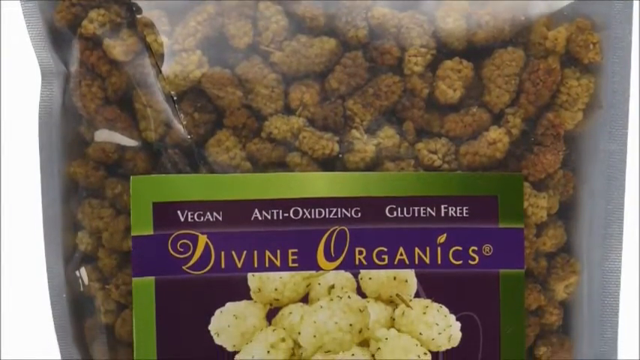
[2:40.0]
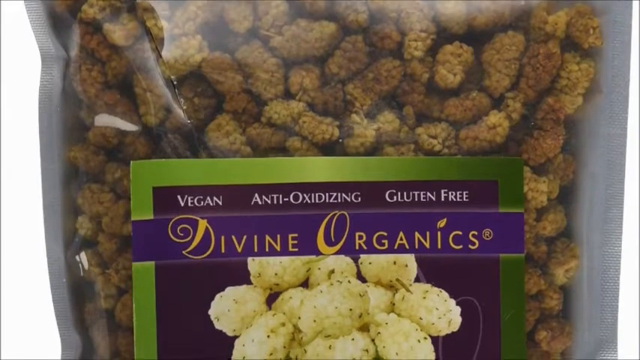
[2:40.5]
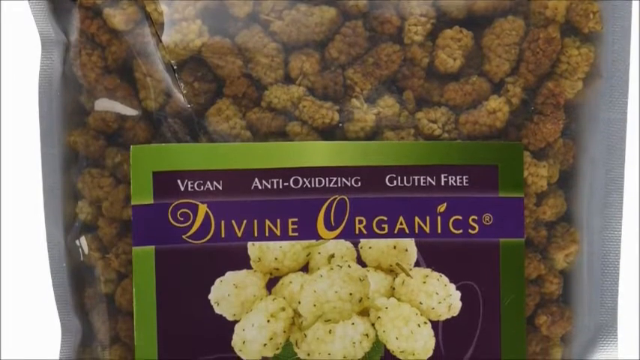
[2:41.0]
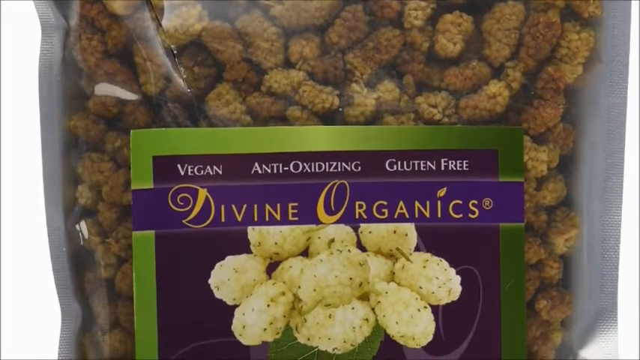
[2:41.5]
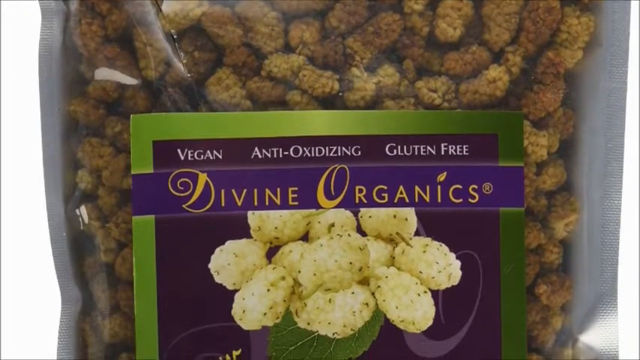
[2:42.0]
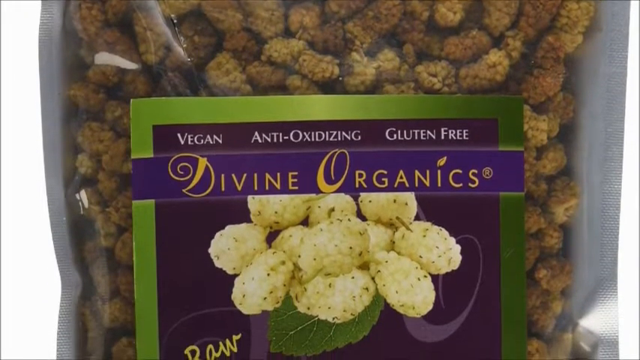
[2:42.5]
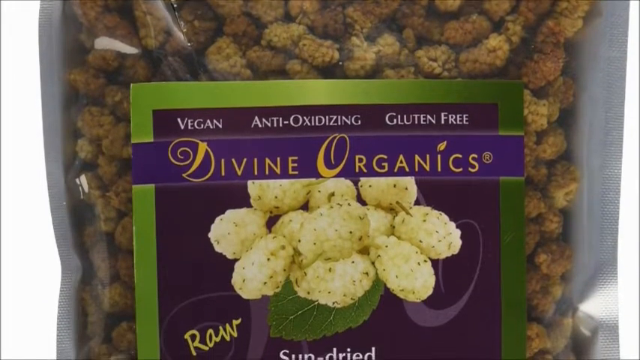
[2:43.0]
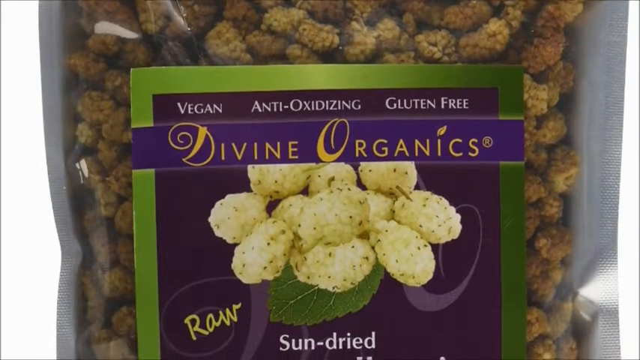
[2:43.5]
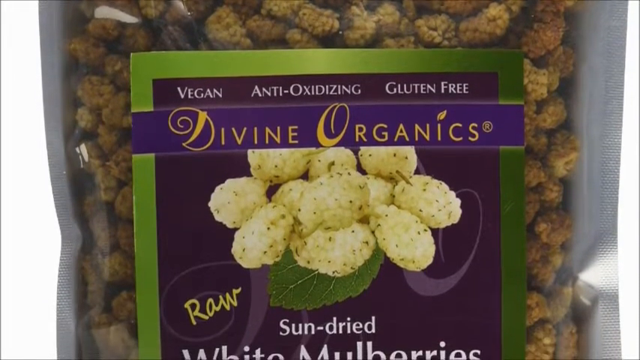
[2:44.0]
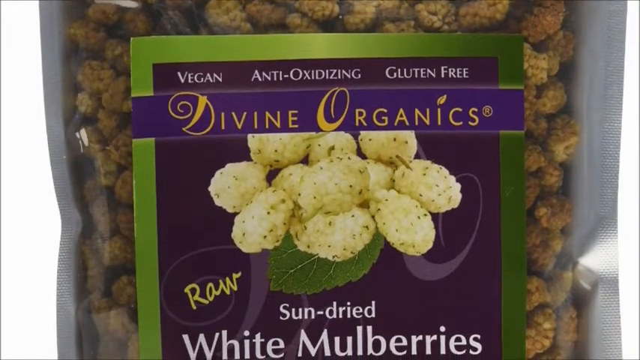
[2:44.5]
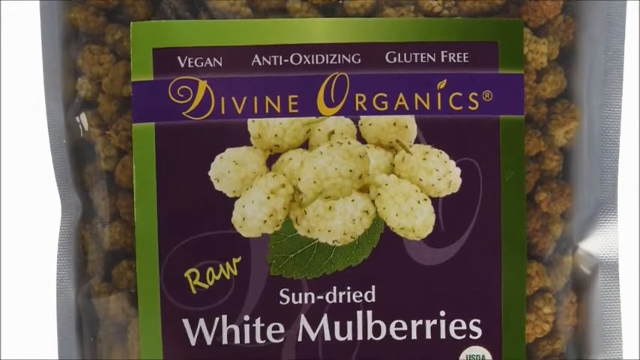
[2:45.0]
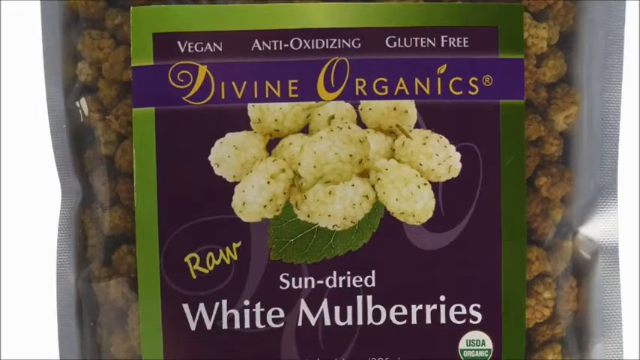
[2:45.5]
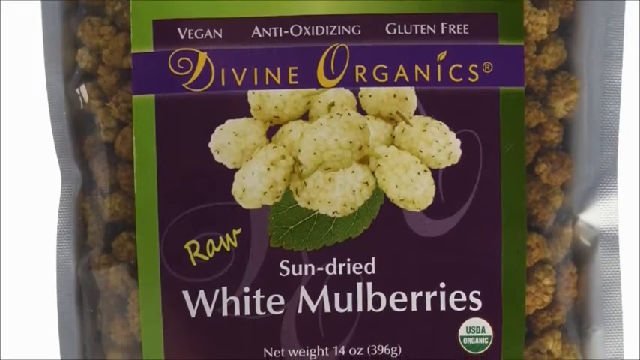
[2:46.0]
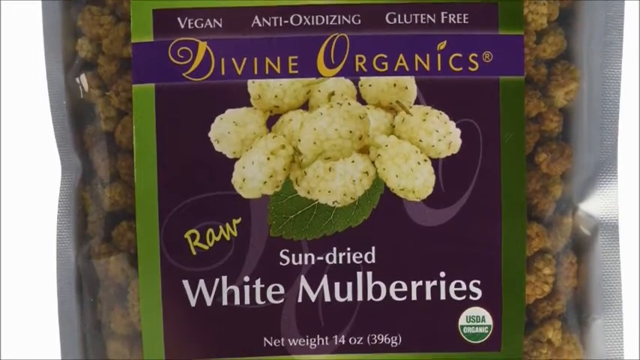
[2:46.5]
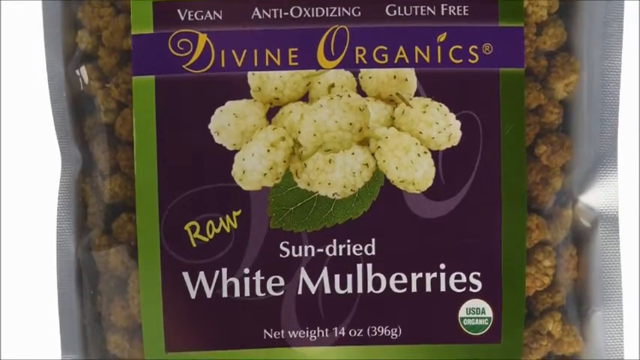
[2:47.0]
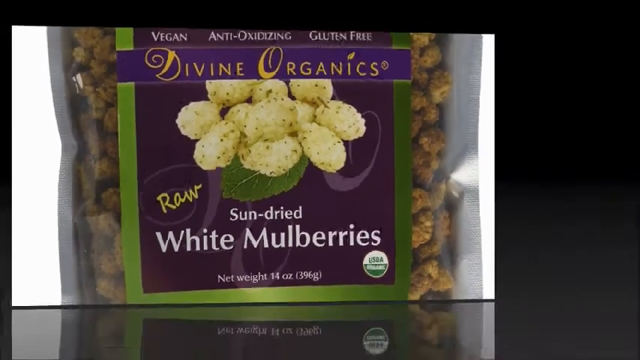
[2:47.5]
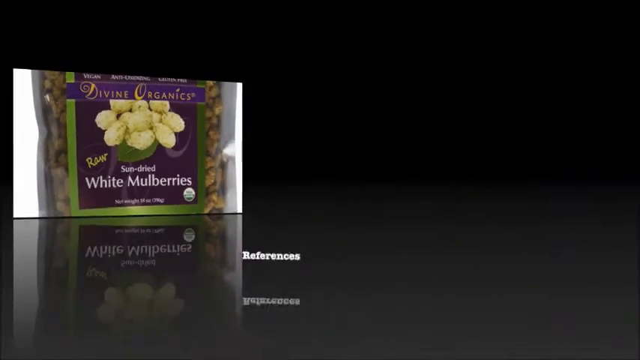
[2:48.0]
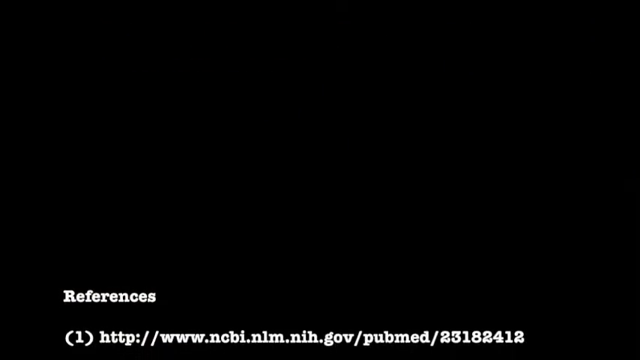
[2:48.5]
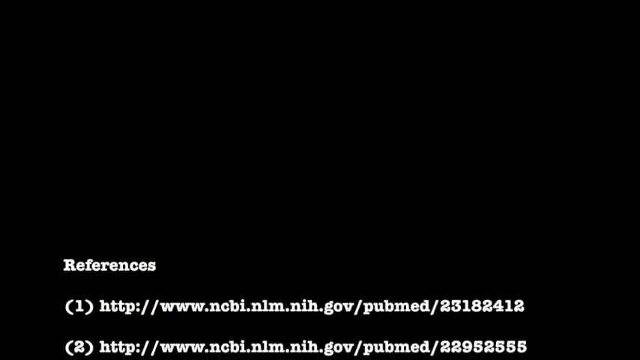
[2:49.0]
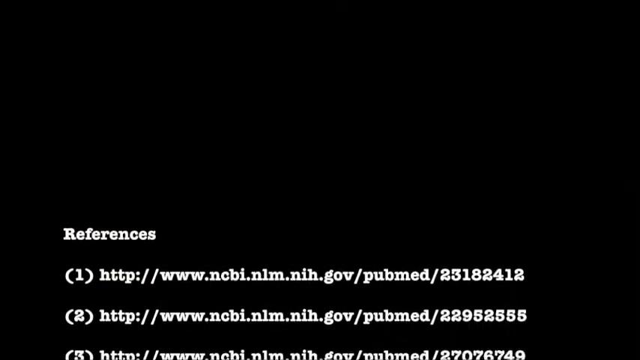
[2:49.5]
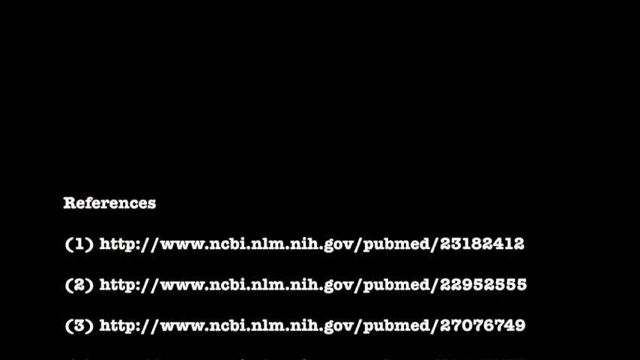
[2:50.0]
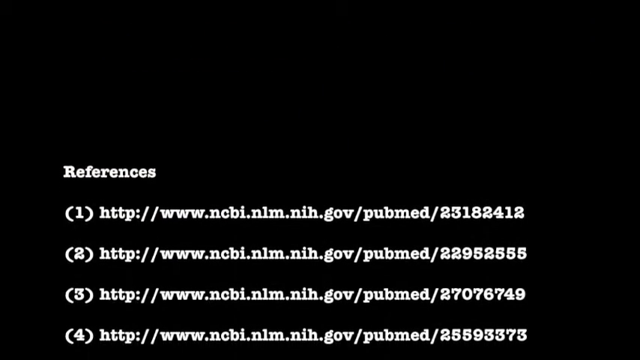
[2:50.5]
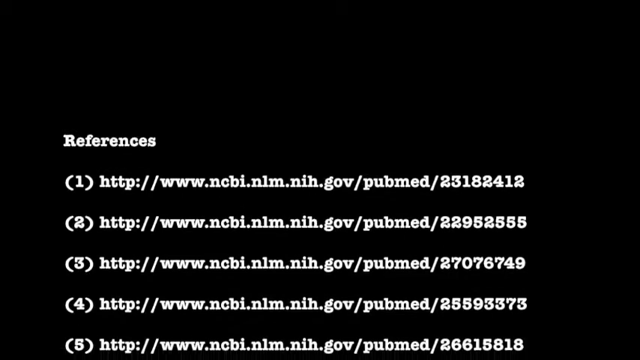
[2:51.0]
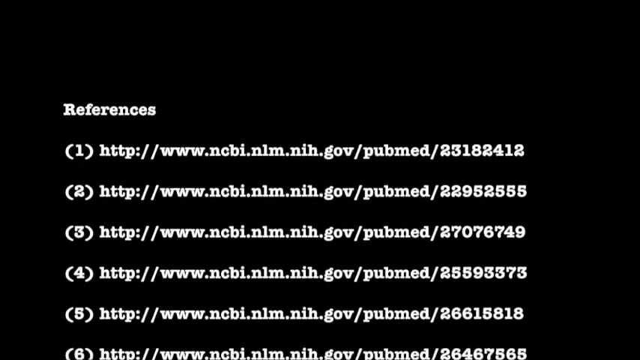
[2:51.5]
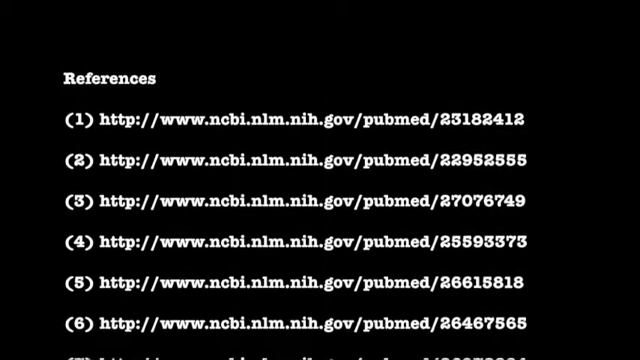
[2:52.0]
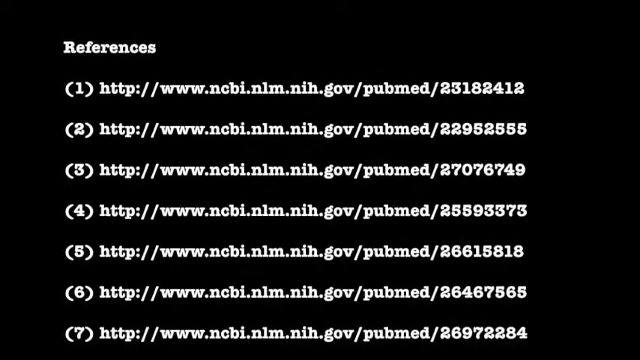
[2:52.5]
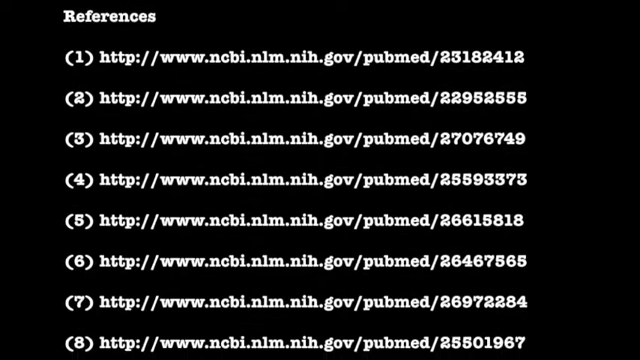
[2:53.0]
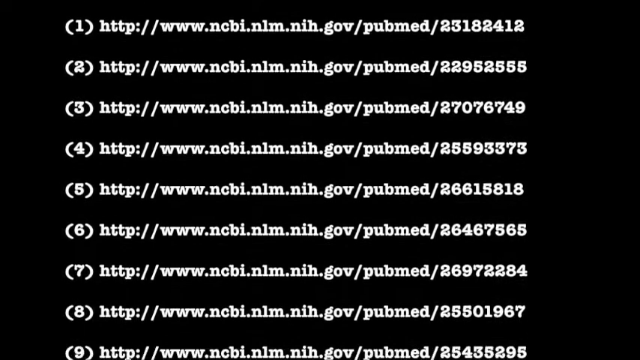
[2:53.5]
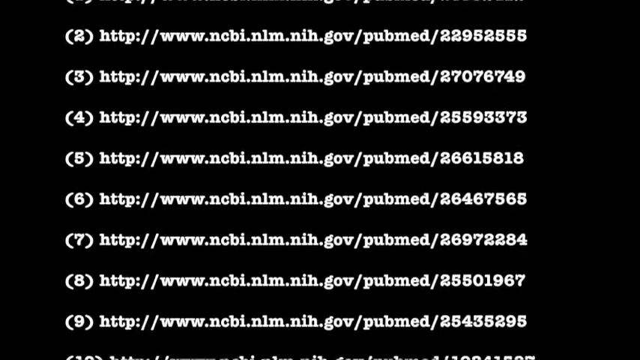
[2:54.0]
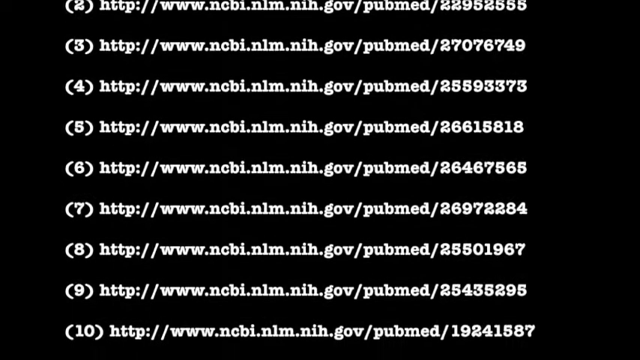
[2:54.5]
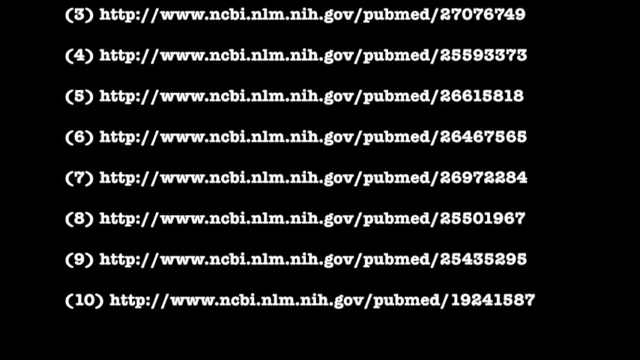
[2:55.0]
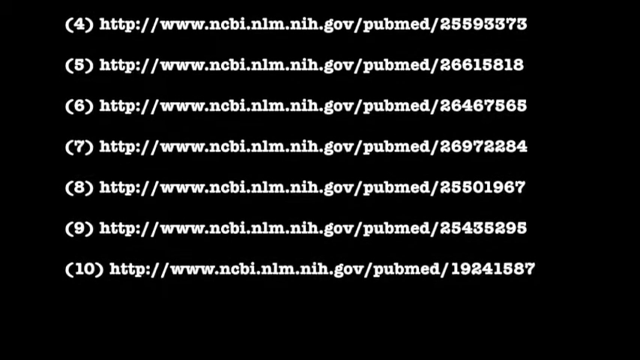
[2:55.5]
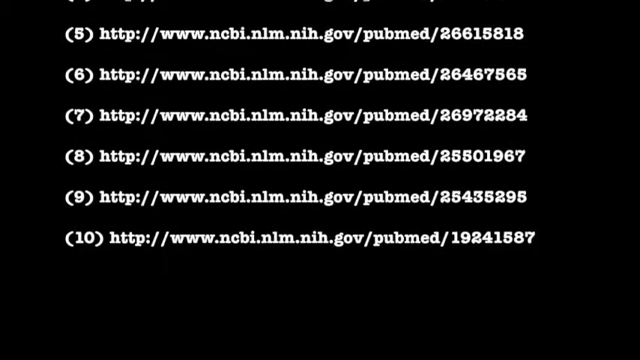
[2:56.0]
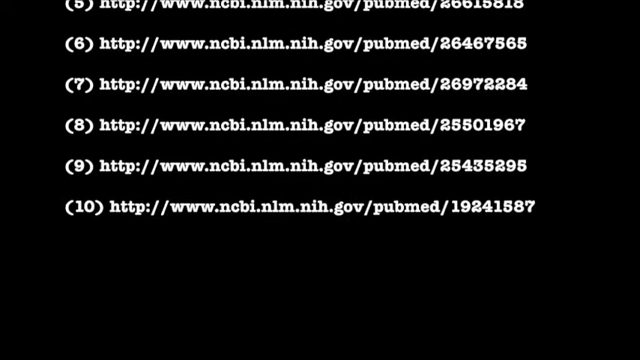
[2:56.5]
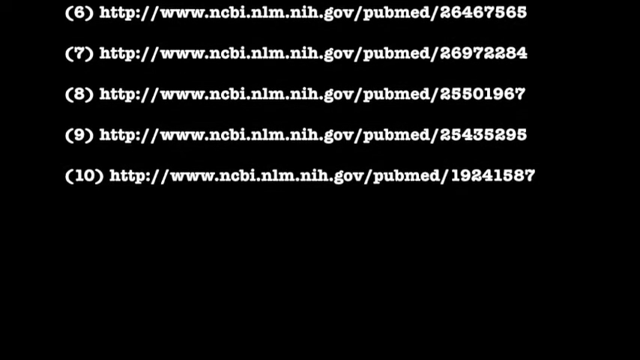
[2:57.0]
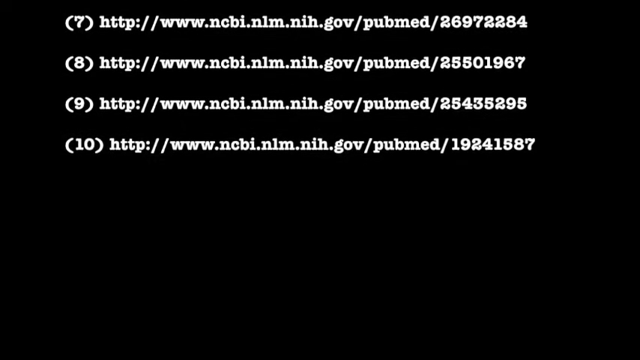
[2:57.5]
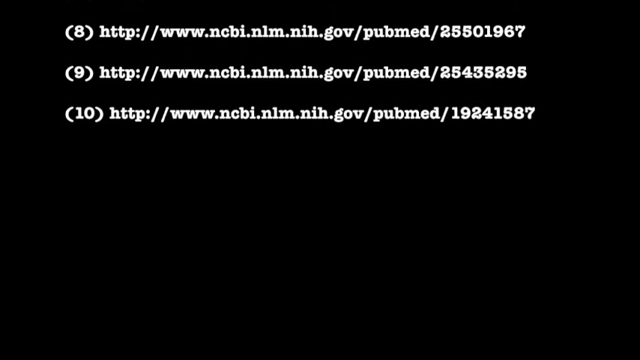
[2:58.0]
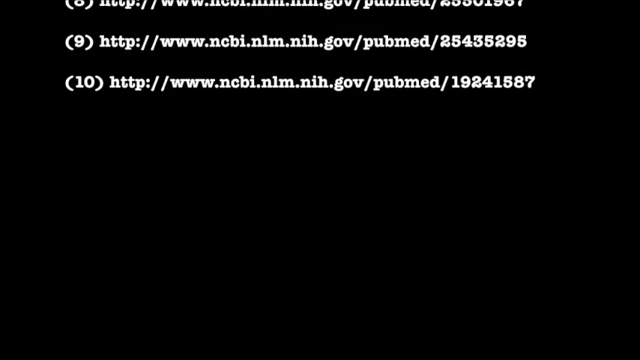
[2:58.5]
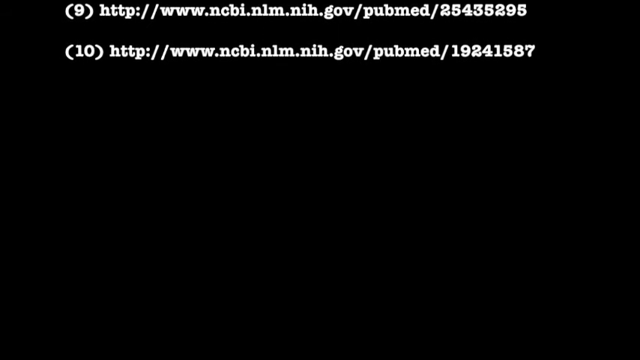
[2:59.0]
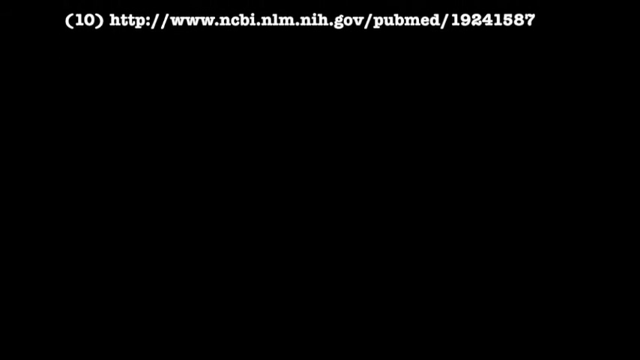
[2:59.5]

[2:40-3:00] A sealed bag of what appears to be dried mulberries is shown. The front of the bag is clear plastic, and the back is a white plastic-type material that cannot be seen through. A light reflection spreads over the entire bag and the product, and the view slowly scrolls down to show the whole bag. The label in the center of the bag shows the brand "Divine Organics." The label is outlined in green with a purple square in the center, and the words "Divine Organics" are in a bluish purple that differs from the center purple, on a blue stripe. The D and the O are in a kind of cursive font, while the rest of "Divine" and "Organics" is in more of an Arial-type font, and the dot of the i is a leaf. The label has a picture of white mulberries and reads "raw sun-dried white mulberries," "vegan," "anti-oxidizing," "gluten-free," "USDA organic" and "net weight 14 ounces." The screen then flips to a list of 10 references citing the scientific studies, all from the same source, the National Health Institute government PubMed website, "ncbi.nlm.nih.gov."